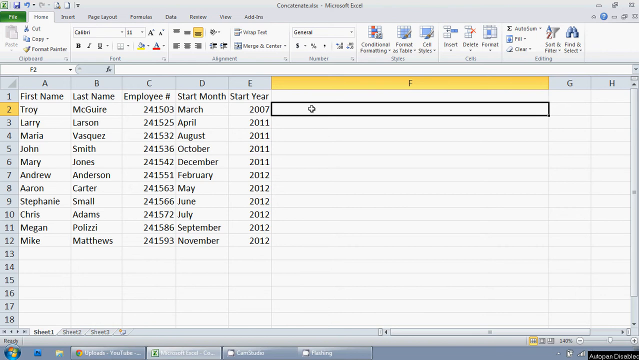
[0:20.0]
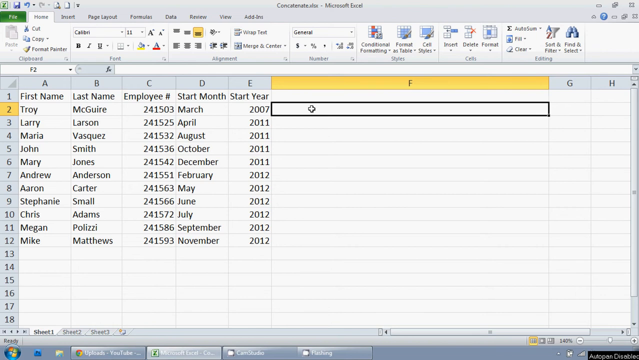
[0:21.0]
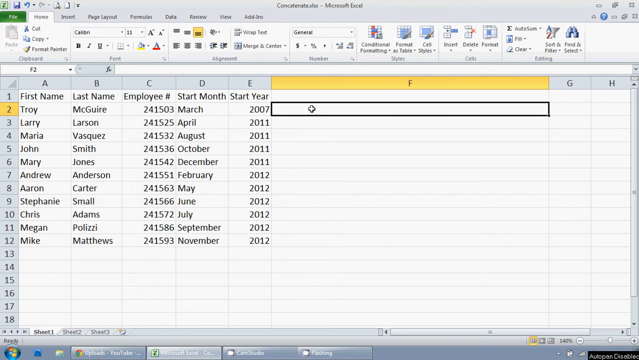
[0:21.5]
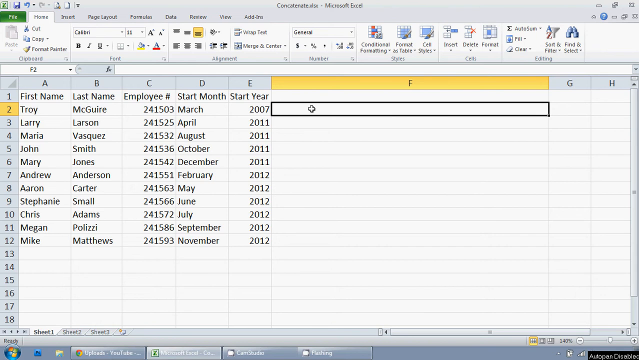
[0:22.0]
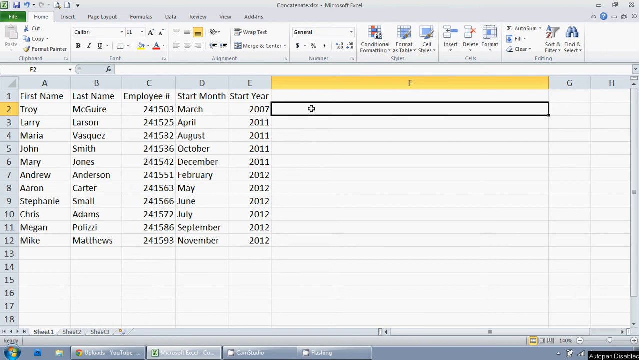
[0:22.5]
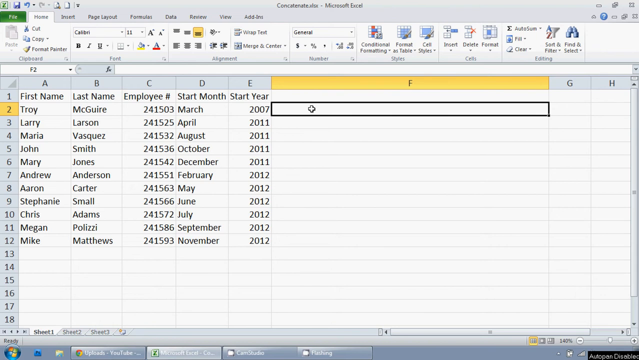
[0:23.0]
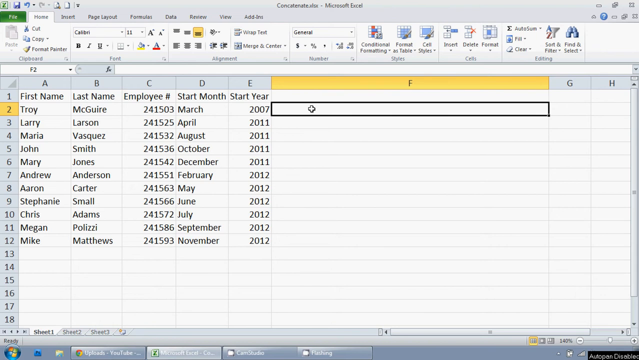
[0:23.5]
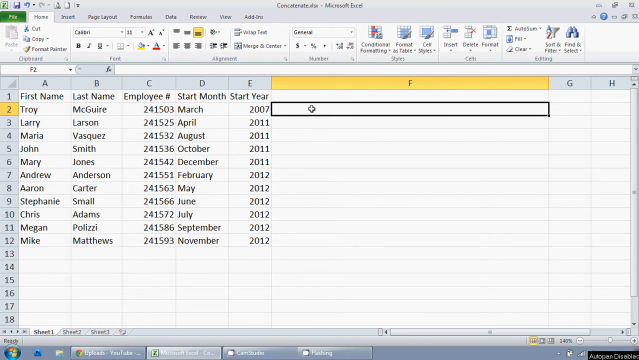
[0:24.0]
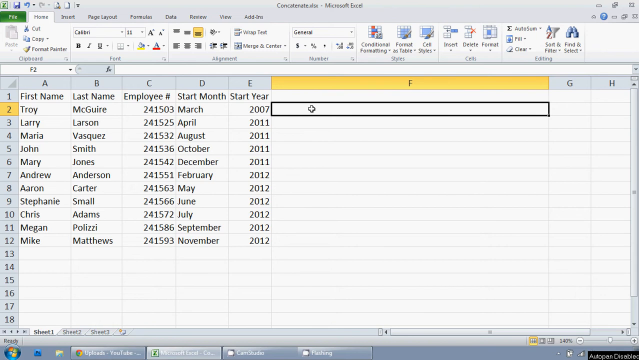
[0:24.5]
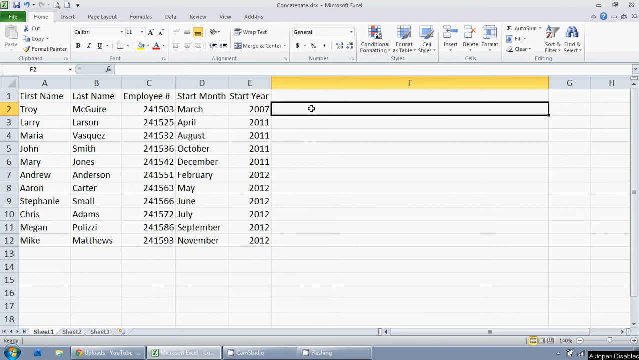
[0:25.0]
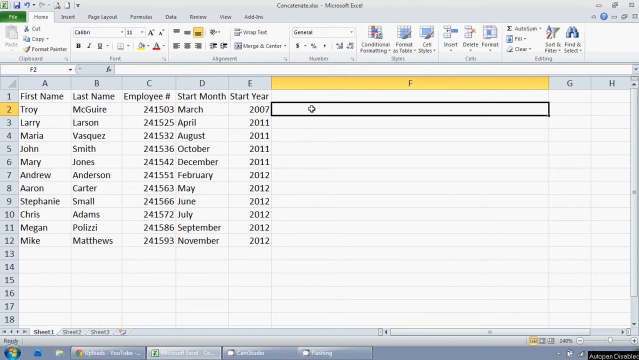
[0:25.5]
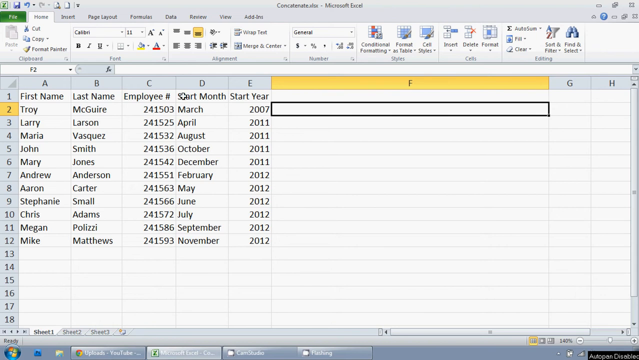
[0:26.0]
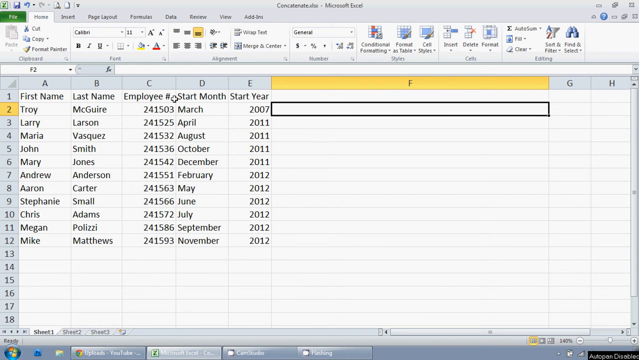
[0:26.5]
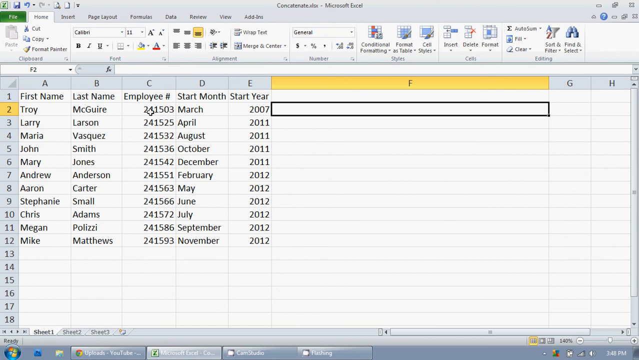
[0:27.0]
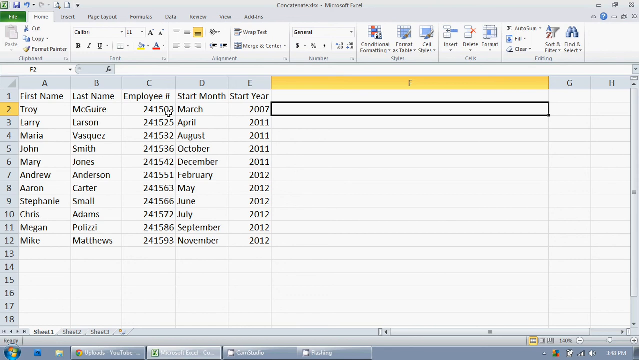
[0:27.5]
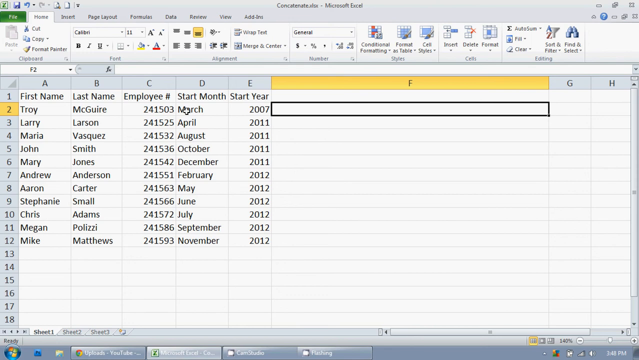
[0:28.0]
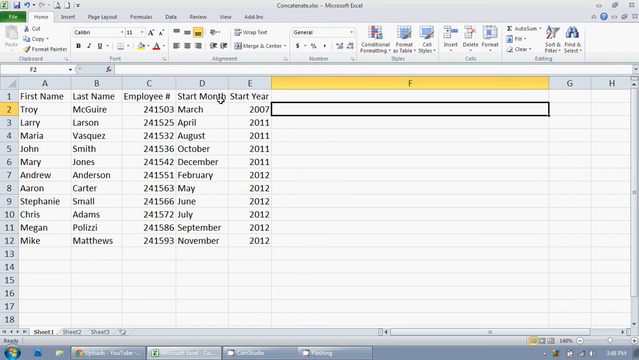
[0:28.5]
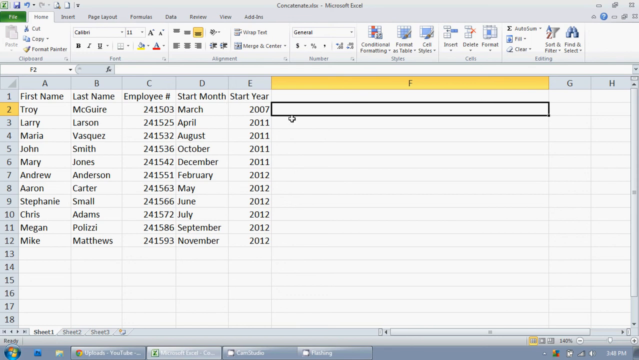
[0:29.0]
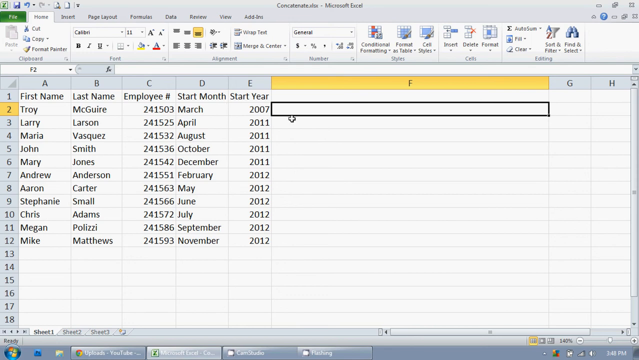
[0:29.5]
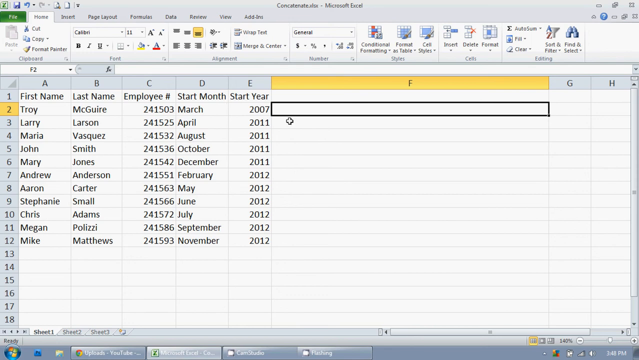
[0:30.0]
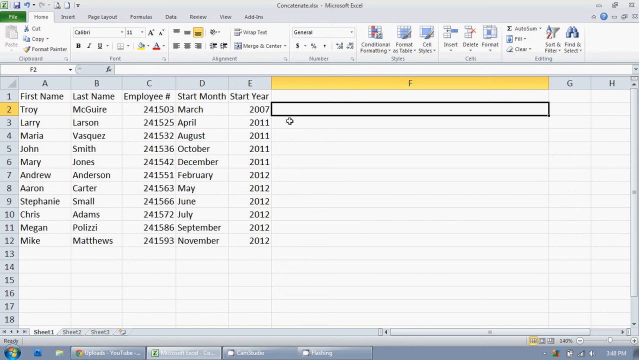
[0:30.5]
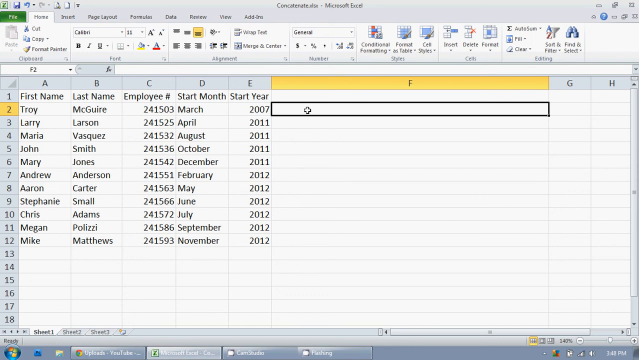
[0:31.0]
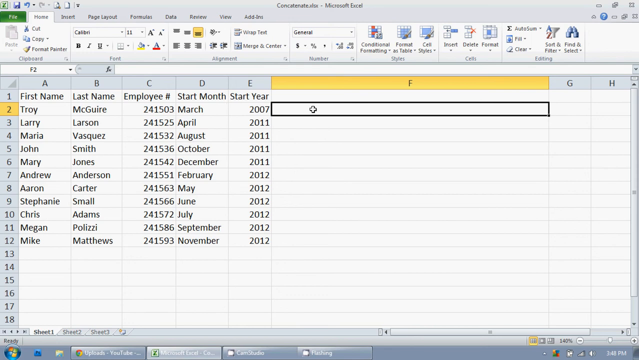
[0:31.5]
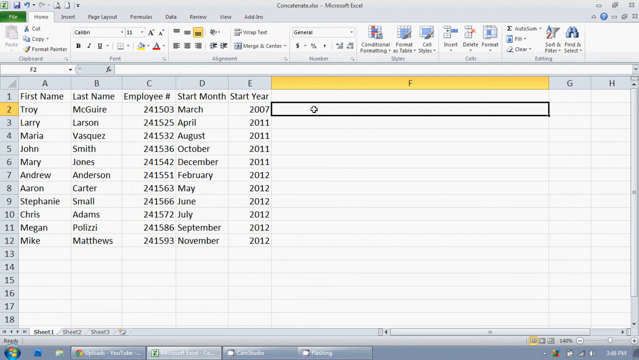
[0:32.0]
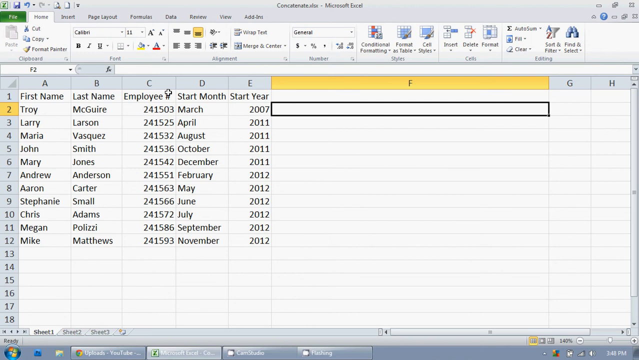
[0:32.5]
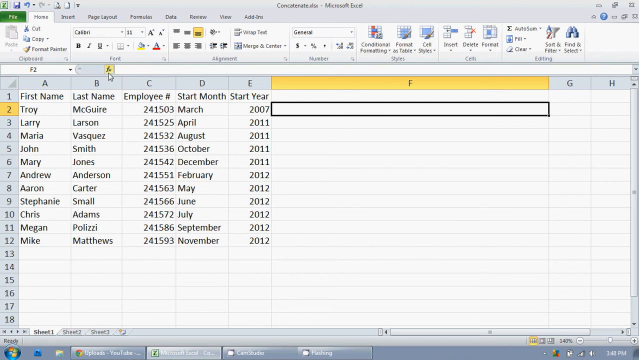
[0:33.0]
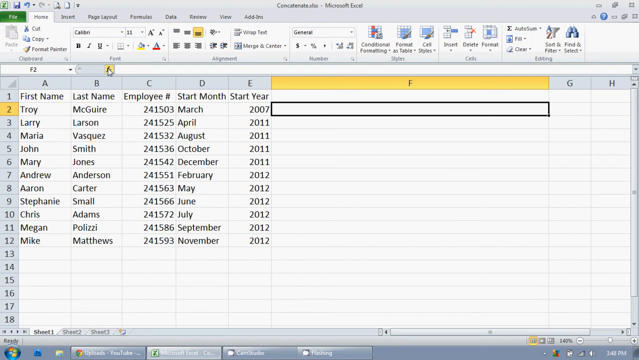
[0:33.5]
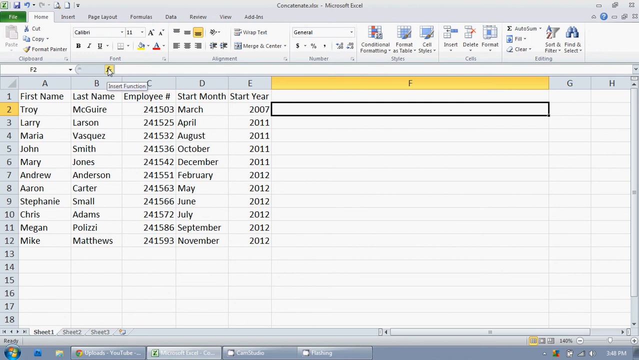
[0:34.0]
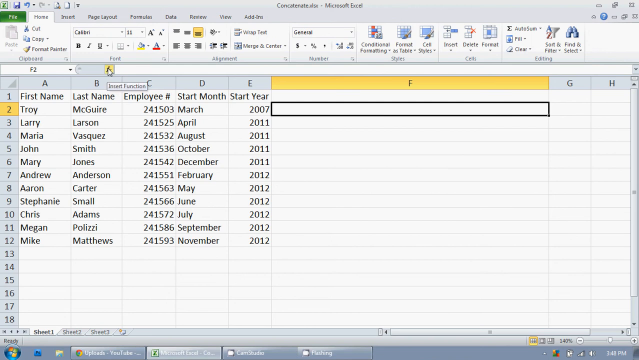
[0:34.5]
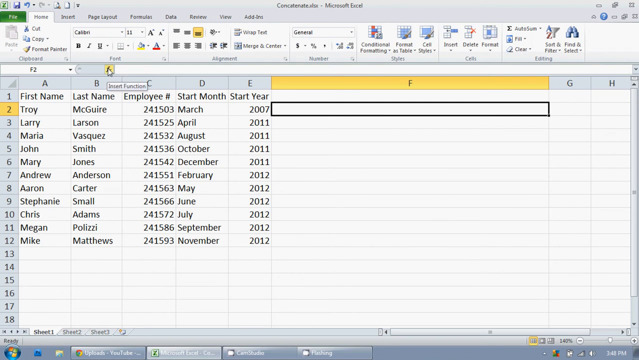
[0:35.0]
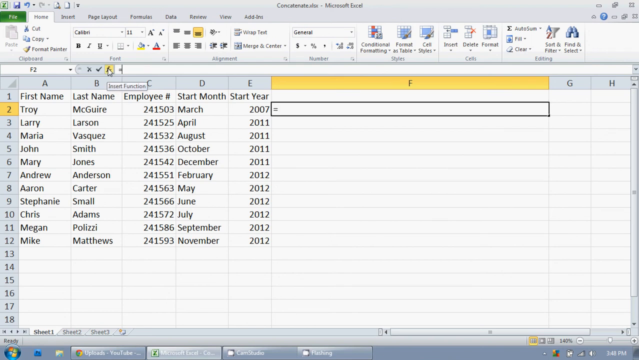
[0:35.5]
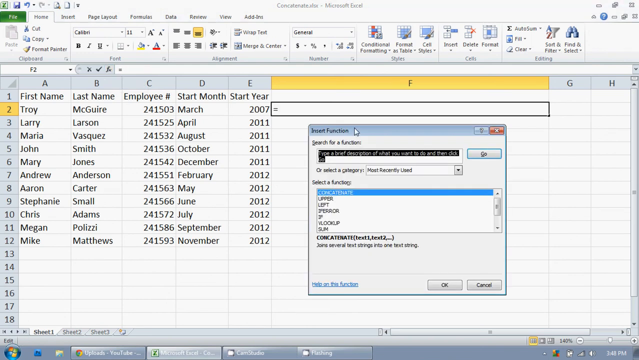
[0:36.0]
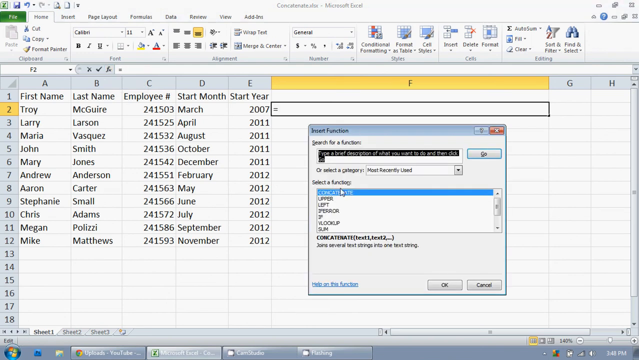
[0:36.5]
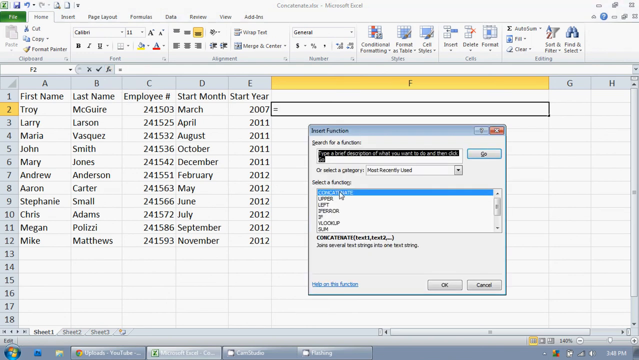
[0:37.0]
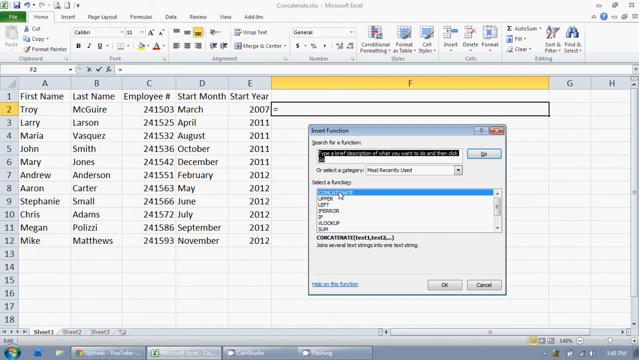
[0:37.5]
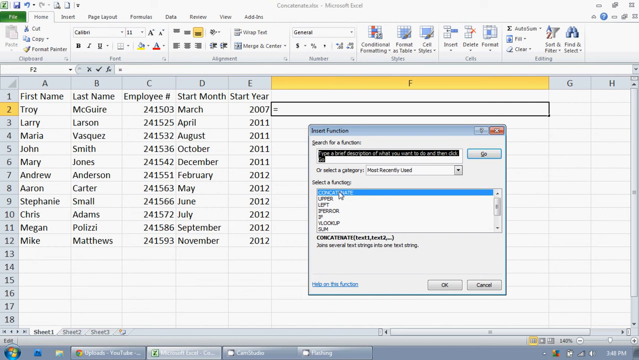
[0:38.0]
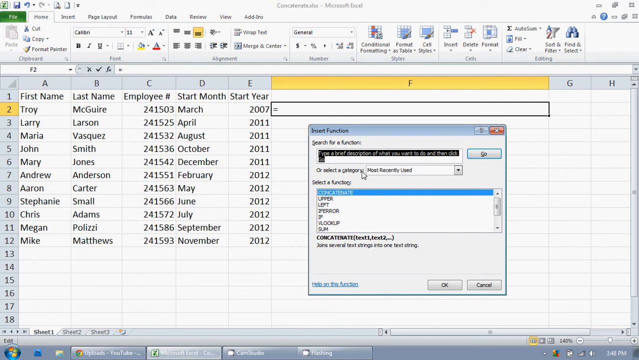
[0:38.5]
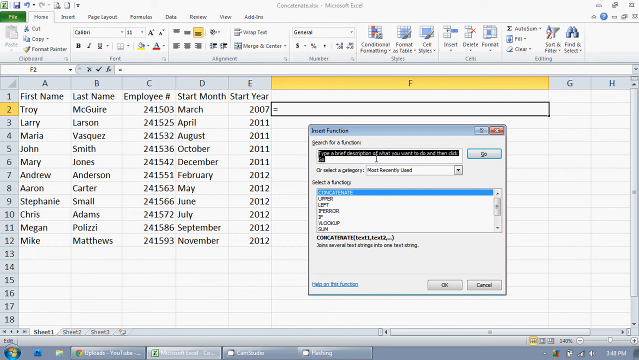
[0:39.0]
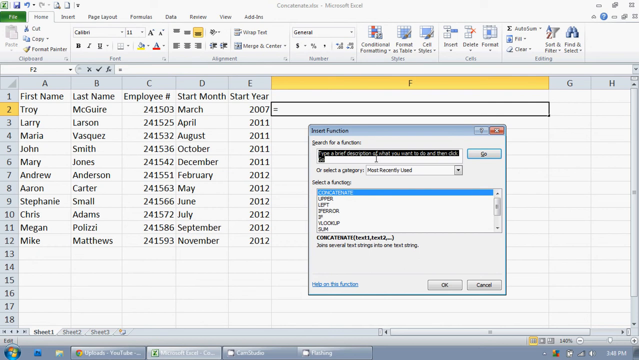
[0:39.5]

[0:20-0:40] The cell in column F, row 2 is selected, with a black border, and the cross-shaped mouse cursor hovers over it. The mouse quickly moves left, then right back to the selected cell. It finally lands on the toolbar above the cell and clicks the insert function, which is highlighted in yellow. A new toolbar pops up with a number of functions to choose from. The "search for function" search box is selected and highlighted in black. So far, no changes have been made to the content of the spreadsheet.